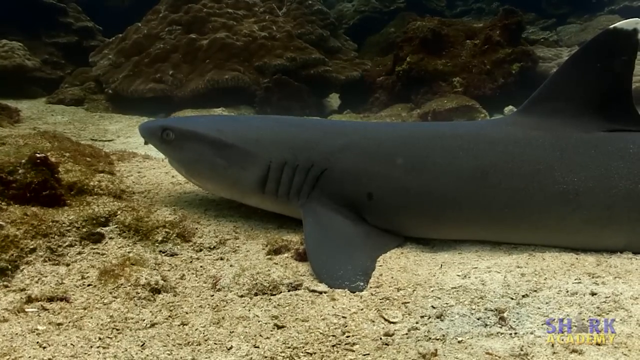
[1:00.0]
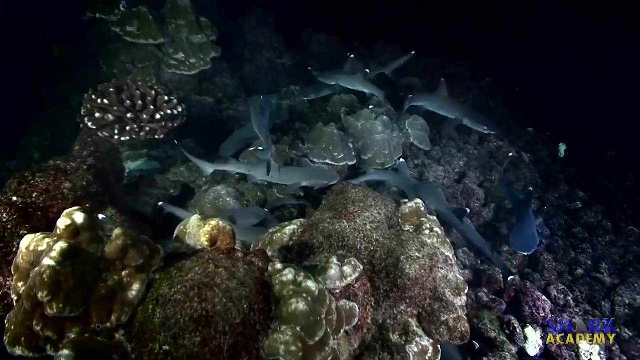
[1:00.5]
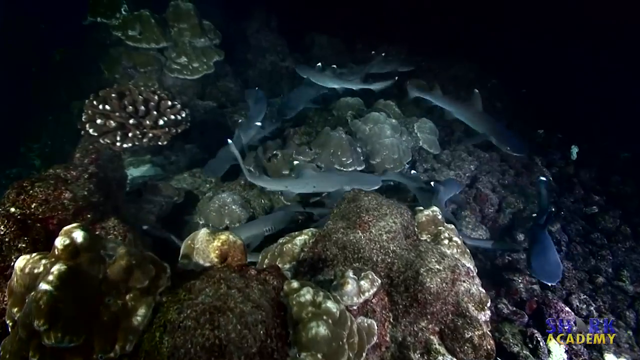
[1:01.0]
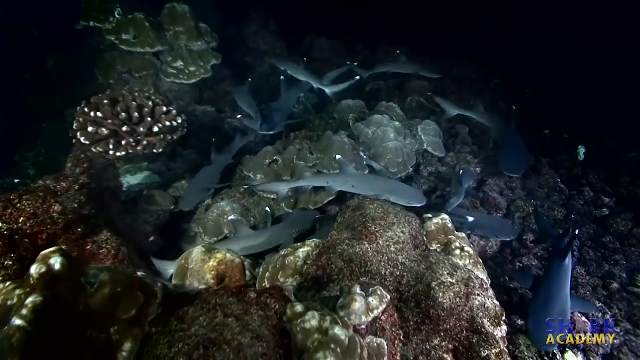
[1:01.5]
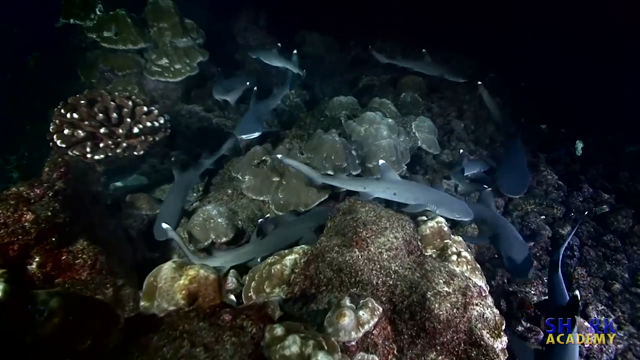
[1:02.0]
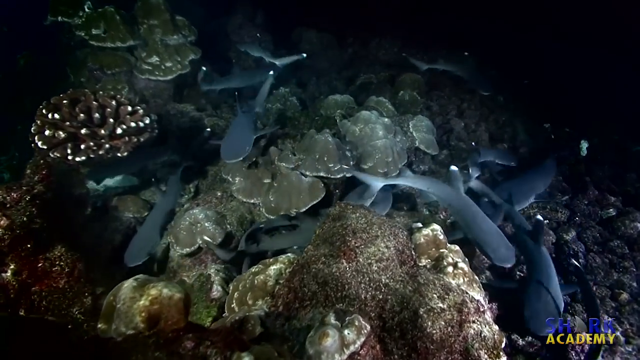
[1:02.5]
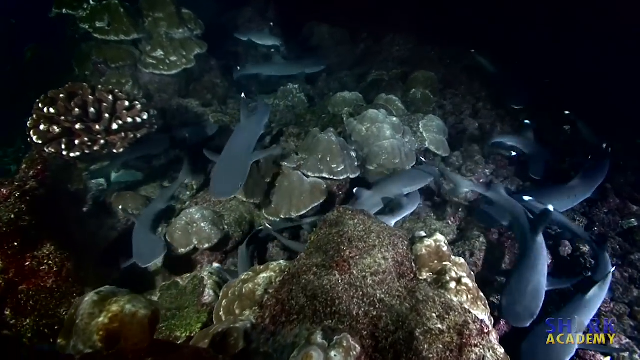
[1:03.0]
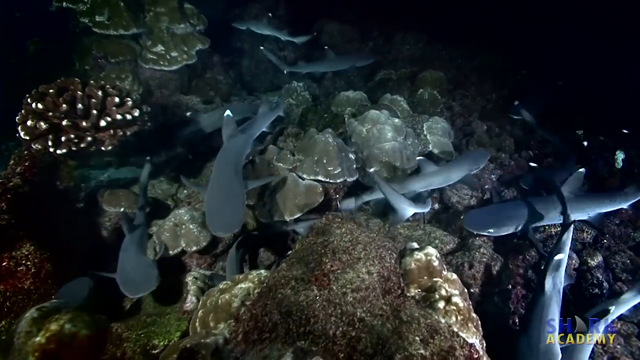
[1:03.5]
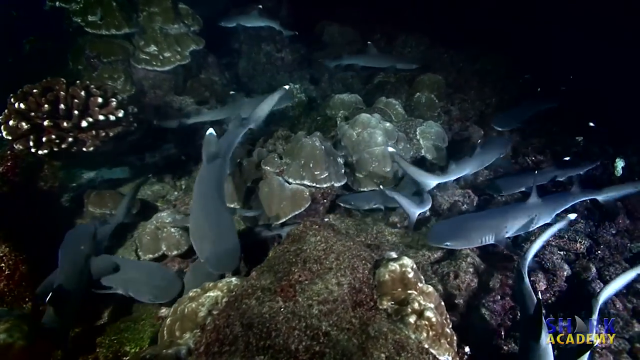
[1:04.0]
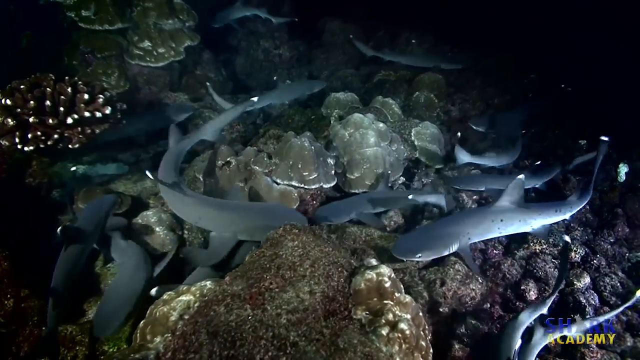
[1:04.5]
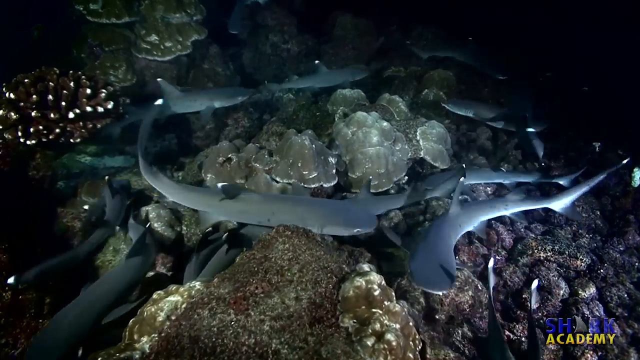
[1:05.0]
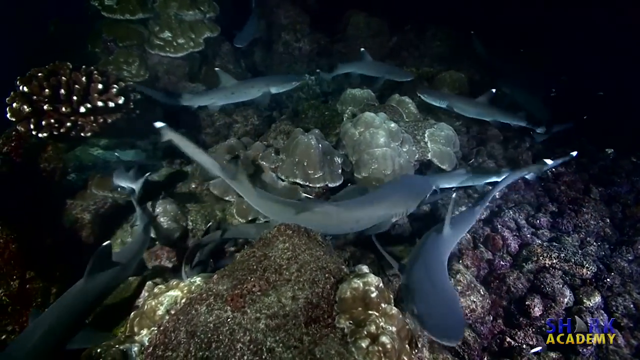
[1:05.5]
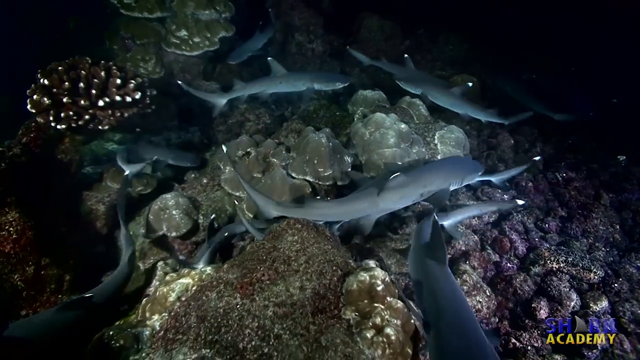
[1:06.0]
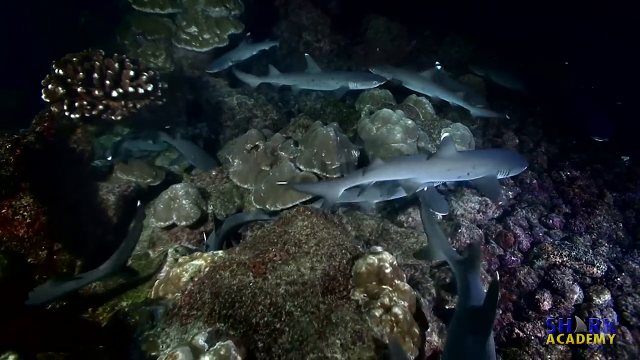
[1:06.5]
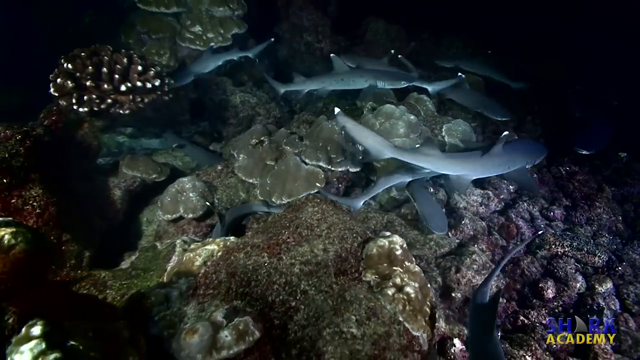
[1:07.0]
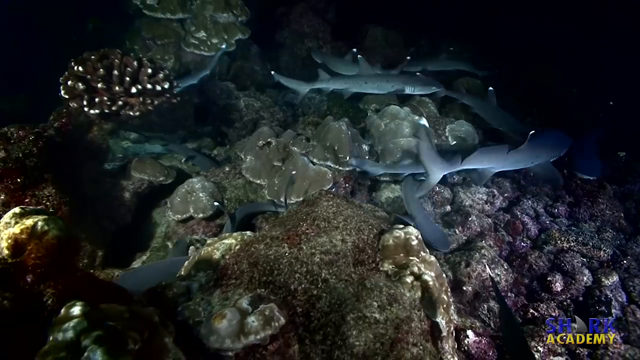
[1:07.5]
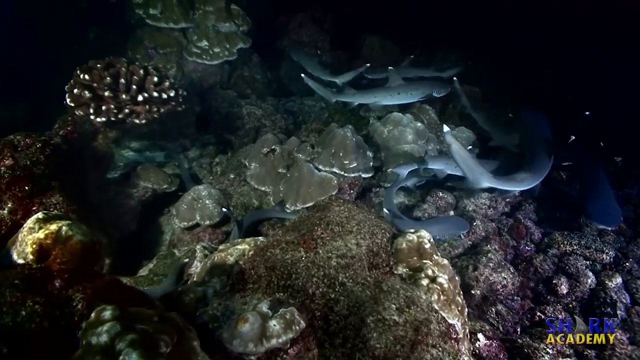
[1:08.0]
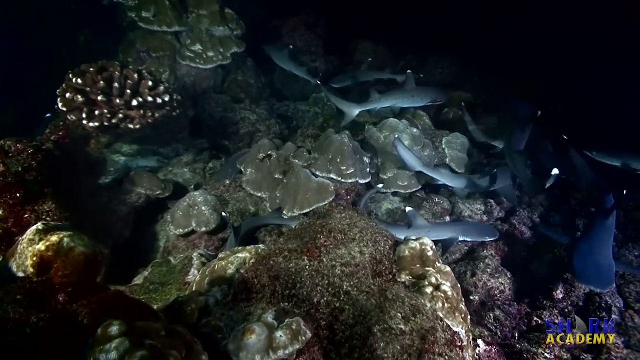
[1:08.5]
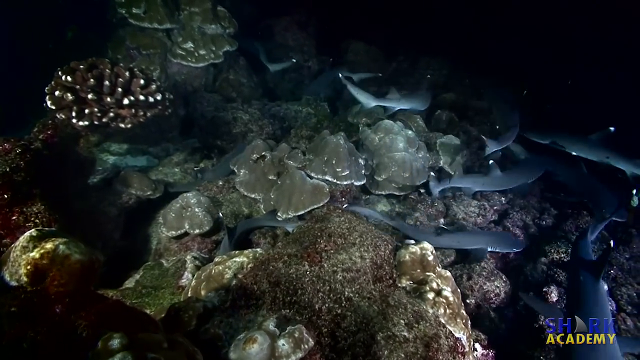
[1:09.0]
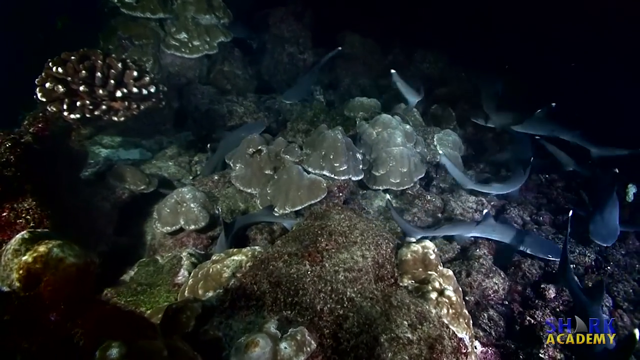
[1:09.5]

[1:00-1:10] A school of many sharks swims around the seabed between rocks and vegetation on the seafloor. There are at least a dozen light gray sharks with noticeable white spots on the tops of their dorsal fins and the tops of their tails. The water around them is very dark, but rocks are visible in the foreground and some type of vegetation is on the sea floor, looking like coral or mushrooms growing all over the rocks. The fish swim in and out all around in circles, and the Shark Academy logo appears in the lower right side of the screen.